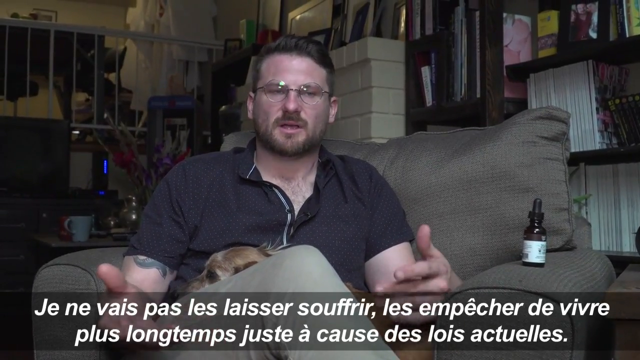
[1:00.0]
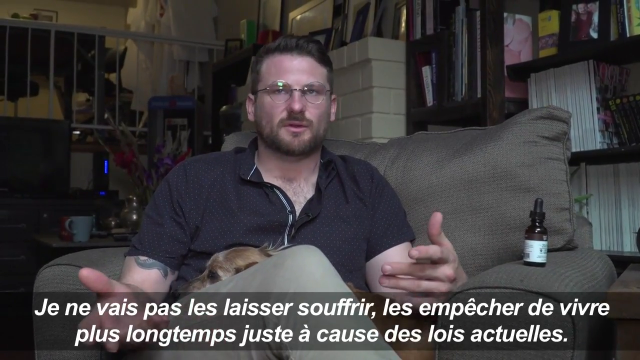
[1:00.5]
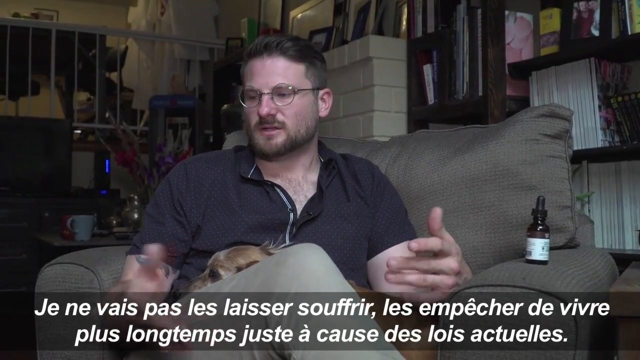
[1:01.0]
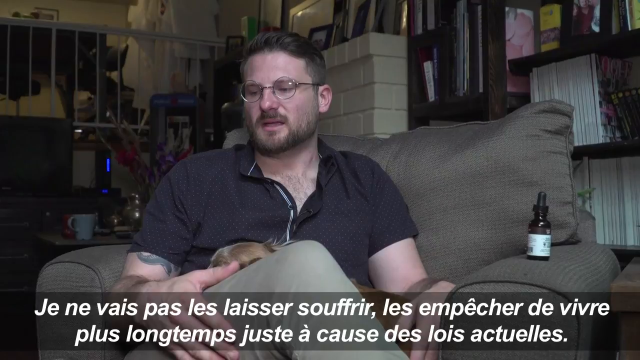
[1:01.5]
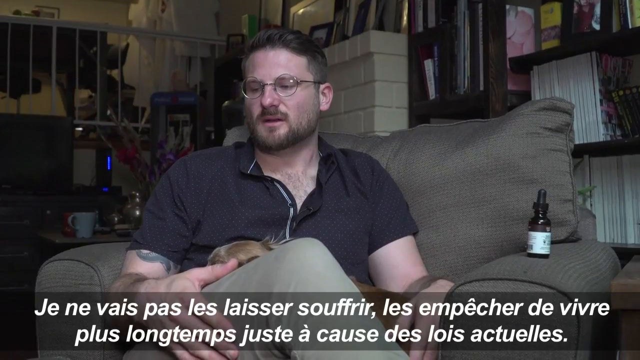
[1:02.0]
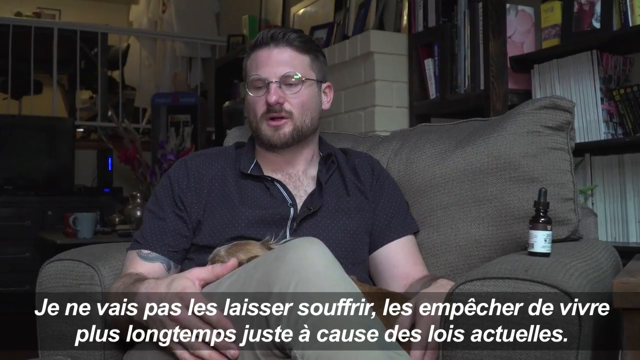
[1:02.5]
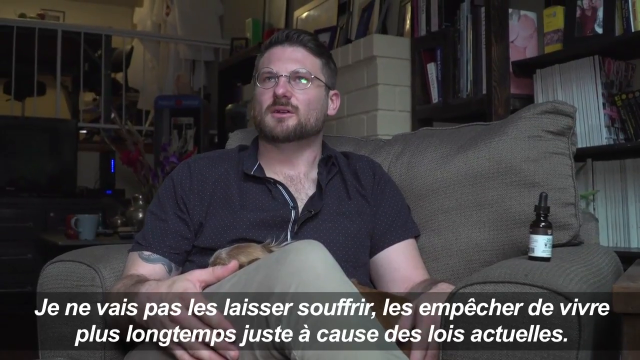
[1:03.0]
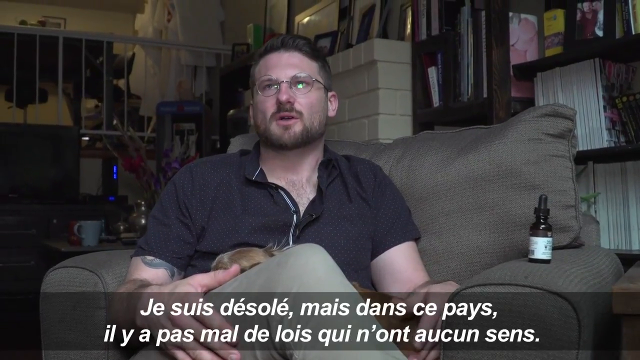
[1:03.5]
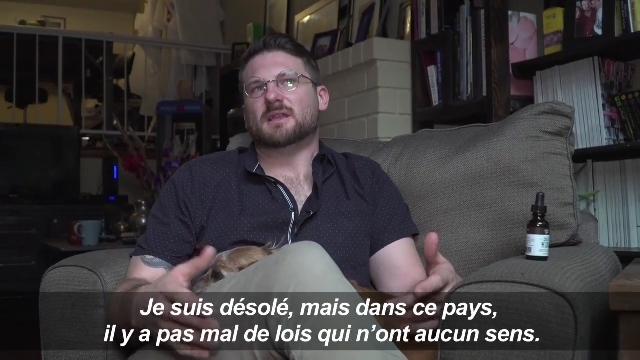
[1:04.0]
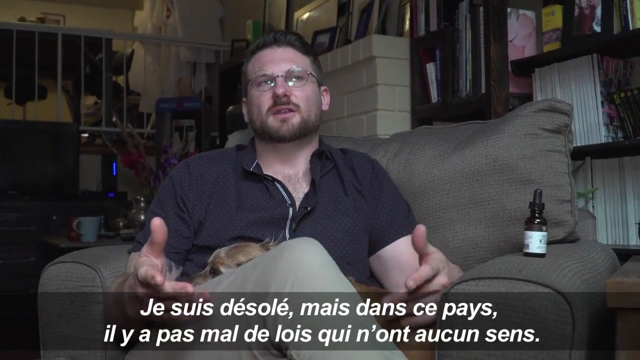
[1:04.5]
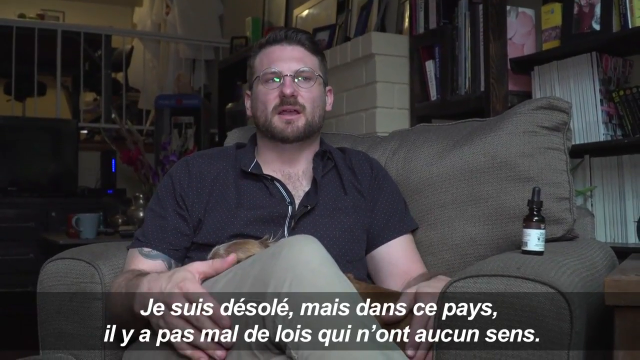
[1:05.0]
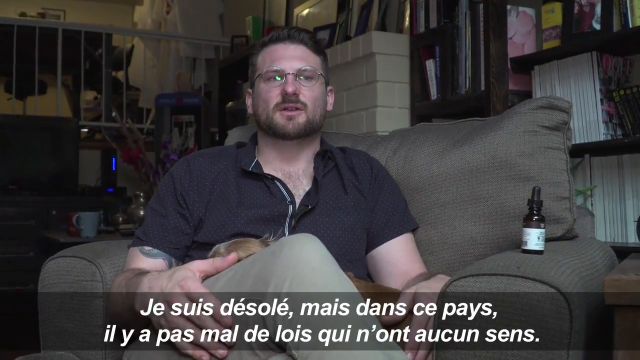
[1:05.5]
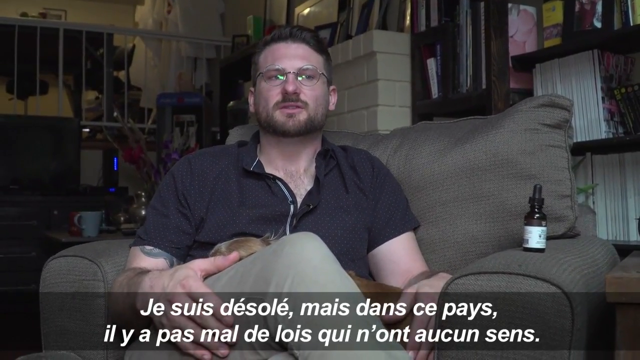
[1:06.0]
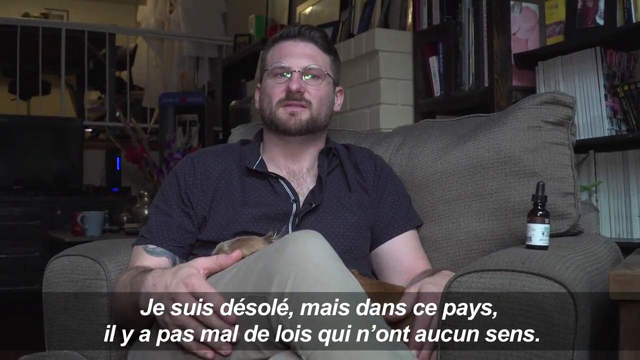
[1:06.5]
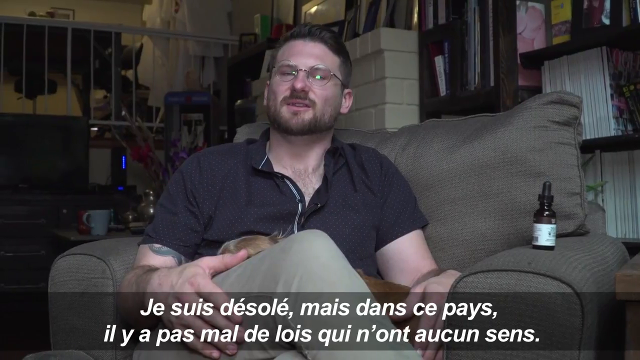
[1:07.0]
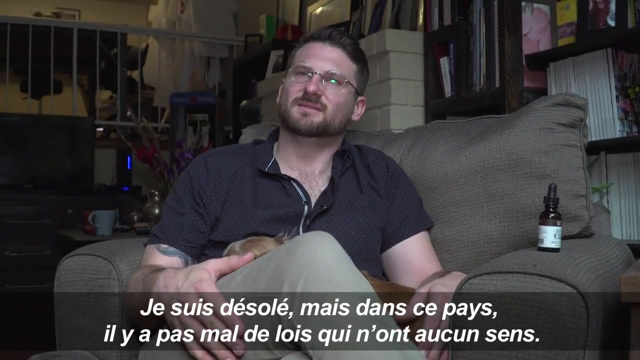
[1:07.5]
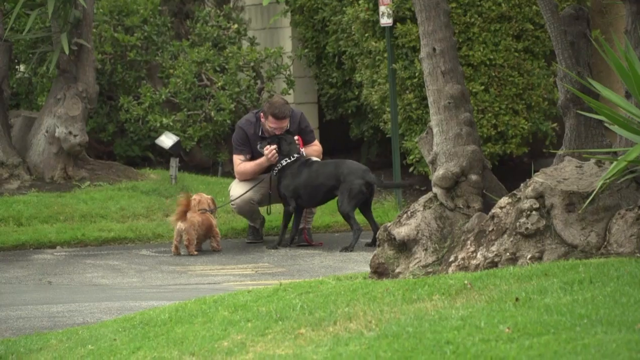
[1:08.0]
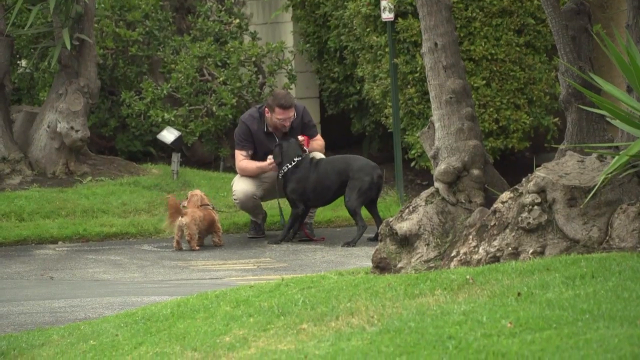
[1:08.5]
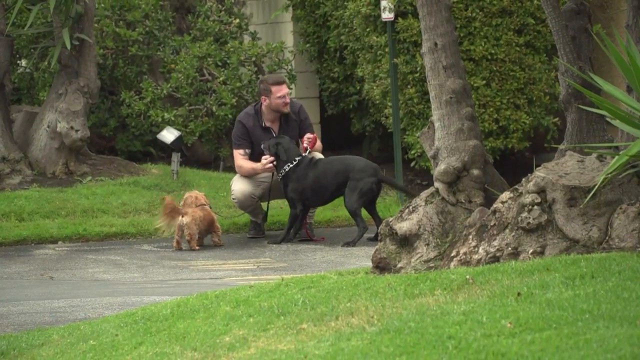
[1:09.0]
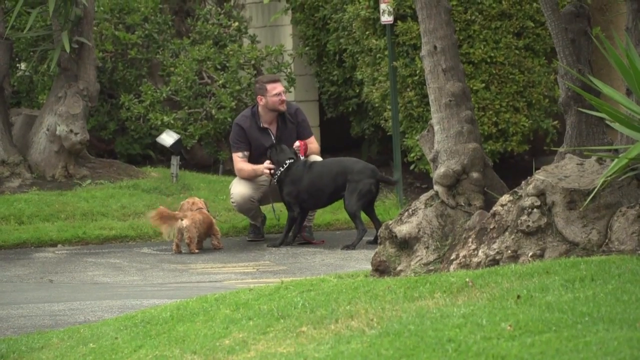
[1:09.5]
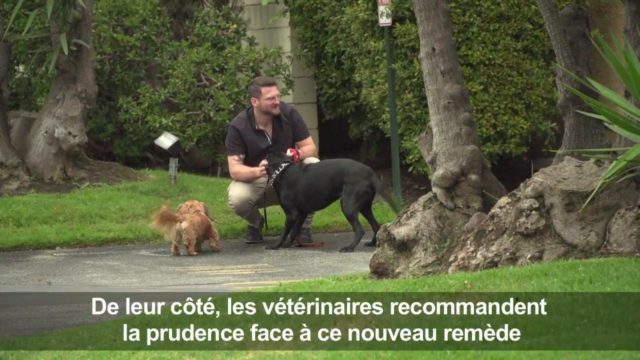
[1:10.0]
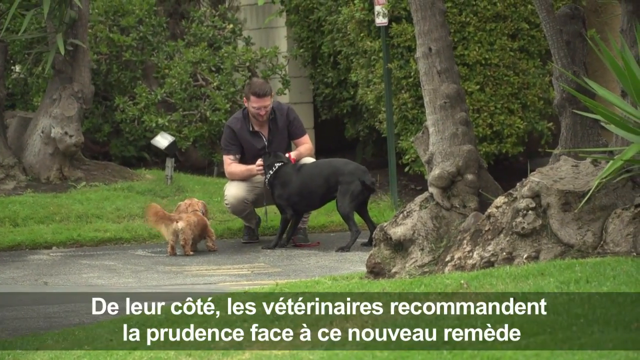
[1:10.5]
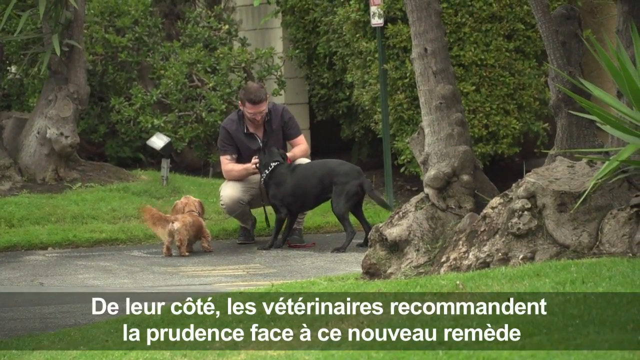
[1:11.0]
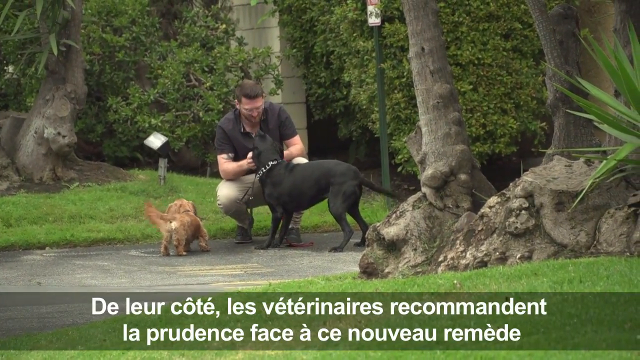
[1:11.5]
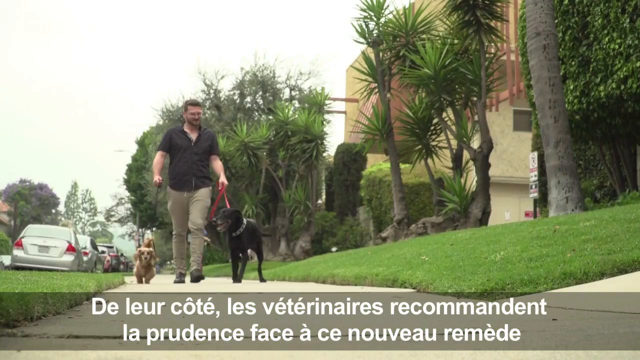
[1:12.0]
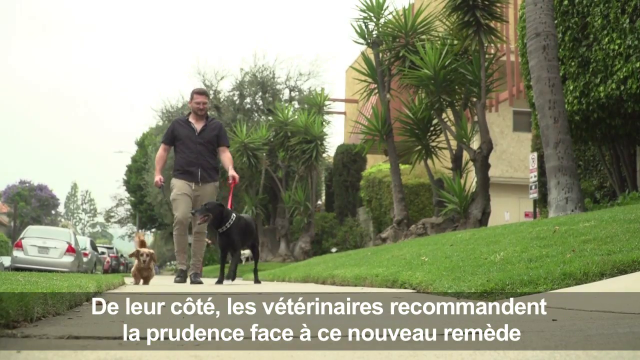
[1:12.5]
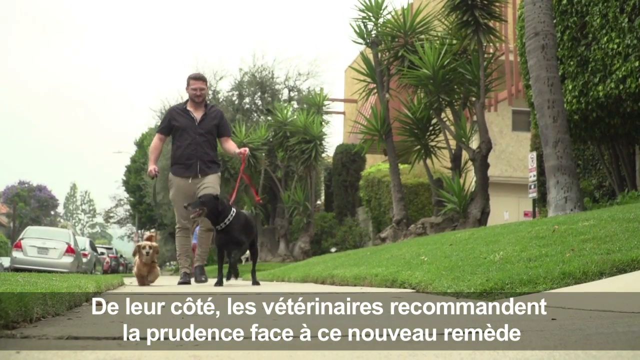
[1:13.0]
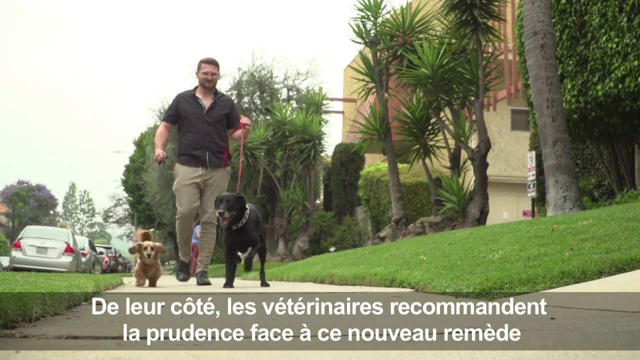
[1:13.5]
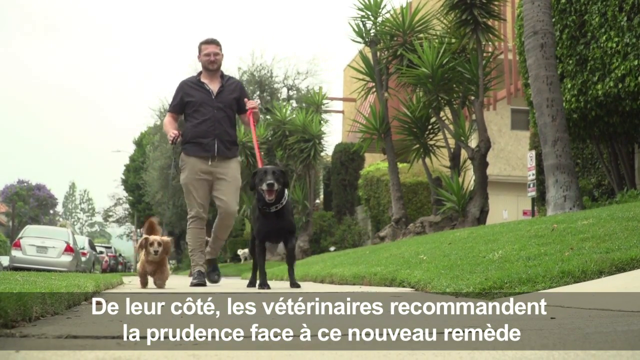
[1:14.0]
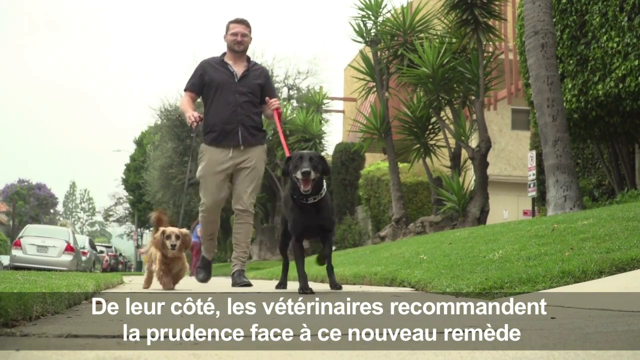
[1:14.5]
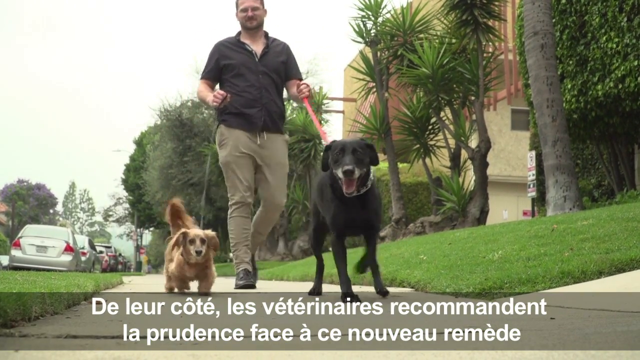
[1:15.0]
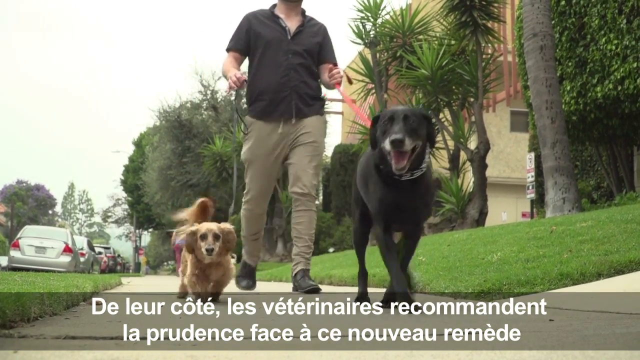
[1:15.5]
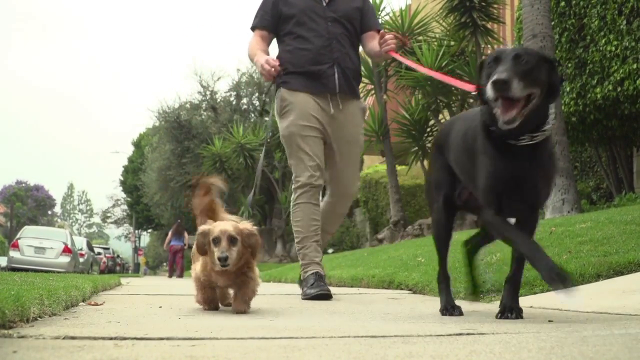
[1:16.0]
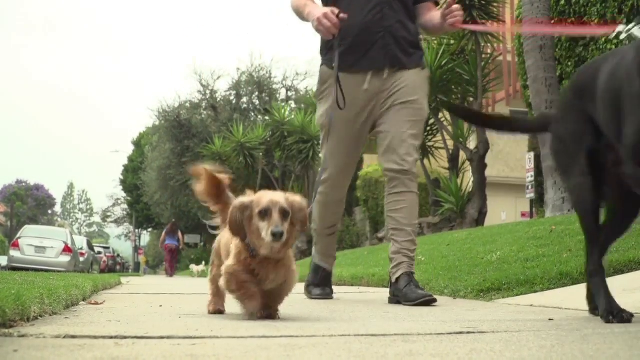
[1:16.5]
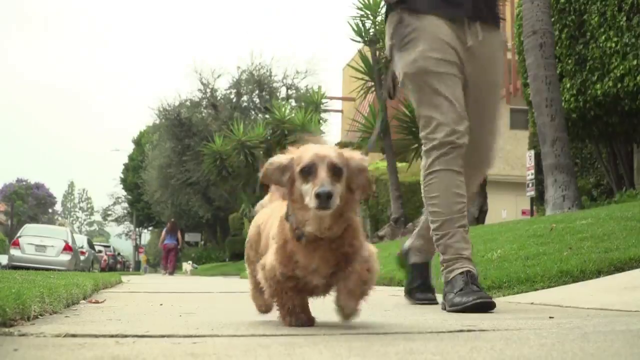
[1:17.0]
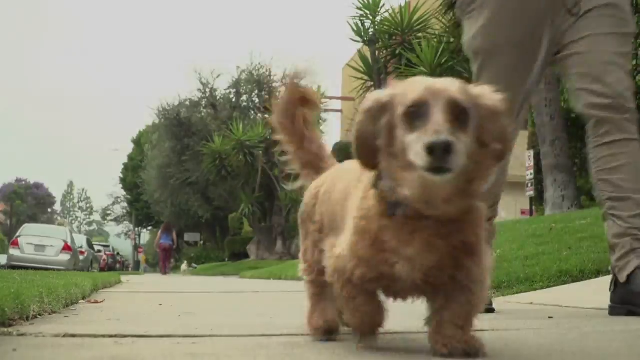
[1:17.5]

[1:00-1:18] The man, in his early to mid 40s with dark hair and dark eyes, clear glasses, a mustache and a beard, wears a short-sleeved, button-down black shirt and light tan pants. He is sitting on a tan couch with a golden dog on his lap. To his left there is a medicine bottle, a CBD treatment for the dogs, and racks of magazines on the viewer's right. To his right, on the viewer's left, there are a coffee cup, a TV and a router. French closed captions appear in front of him.